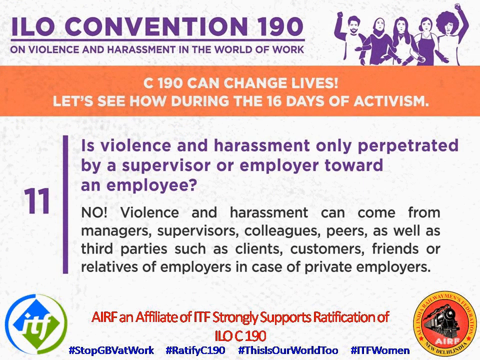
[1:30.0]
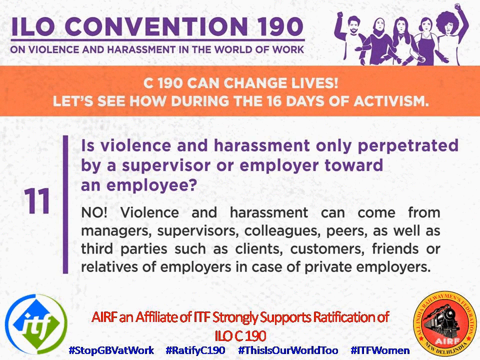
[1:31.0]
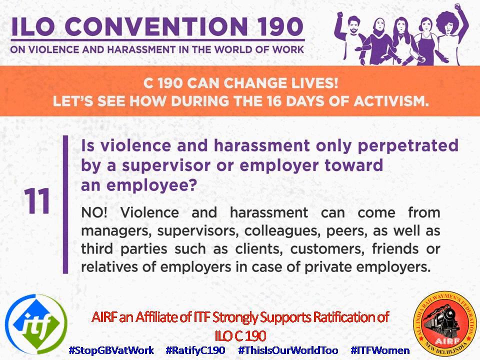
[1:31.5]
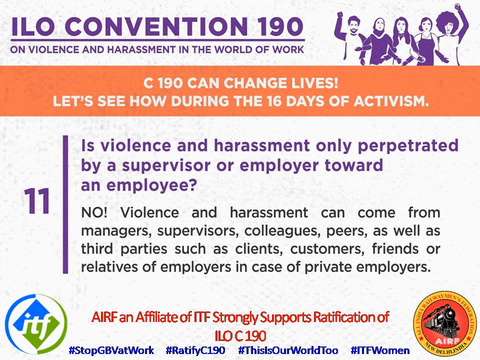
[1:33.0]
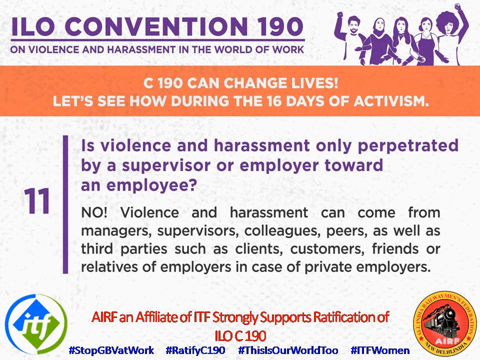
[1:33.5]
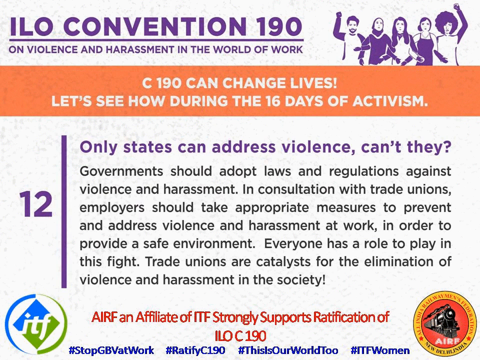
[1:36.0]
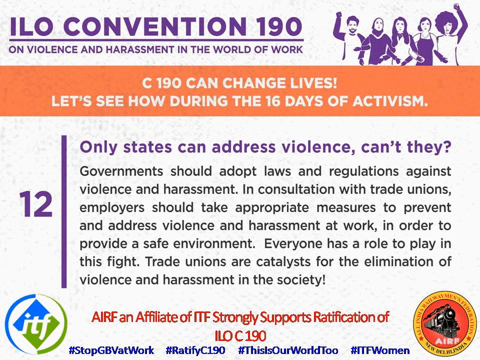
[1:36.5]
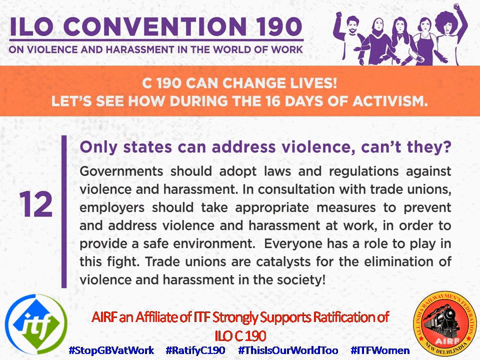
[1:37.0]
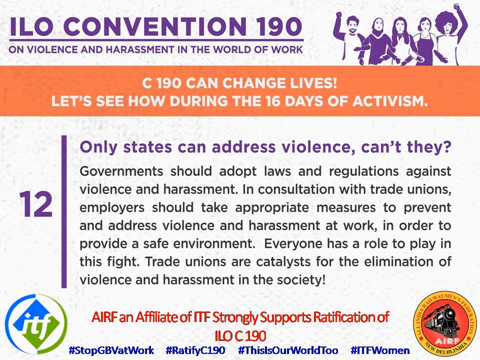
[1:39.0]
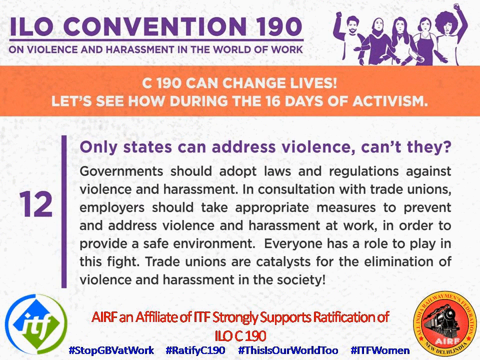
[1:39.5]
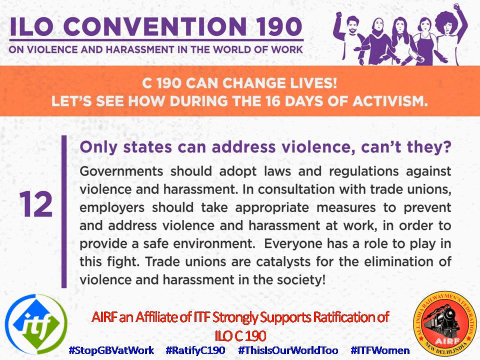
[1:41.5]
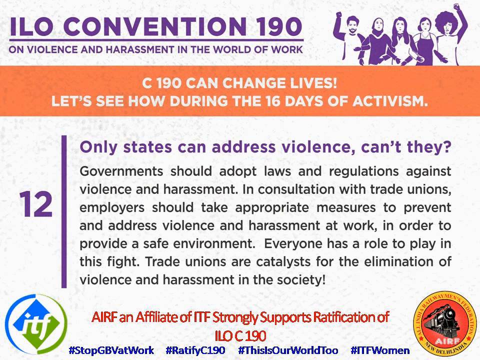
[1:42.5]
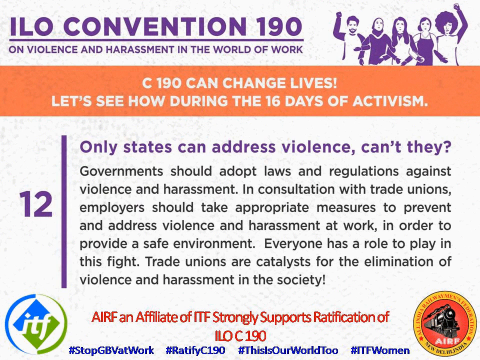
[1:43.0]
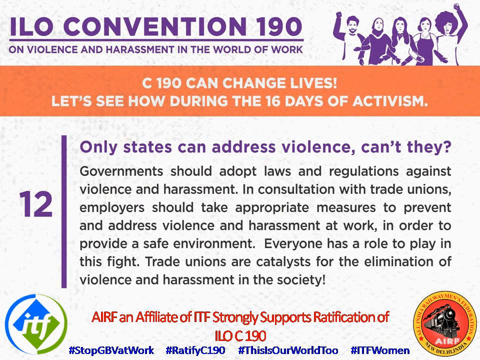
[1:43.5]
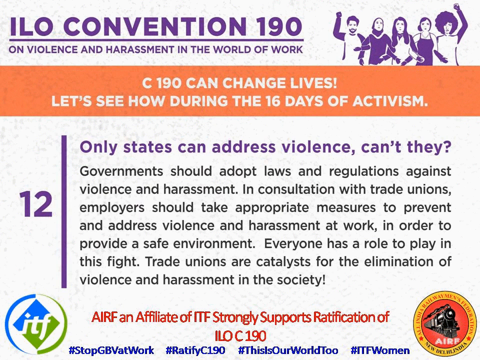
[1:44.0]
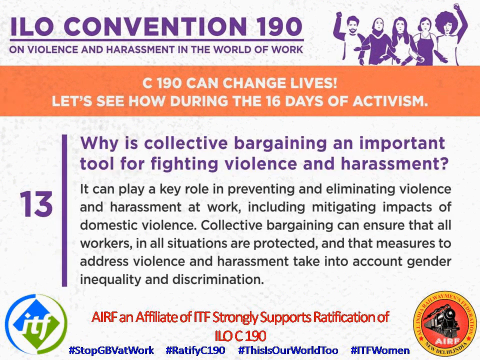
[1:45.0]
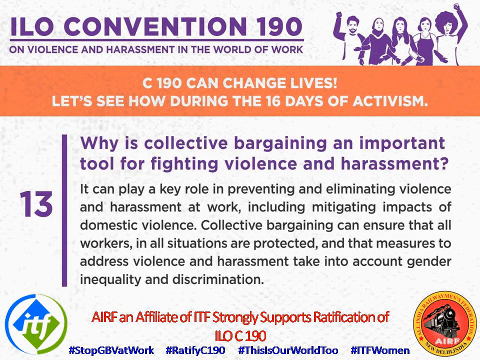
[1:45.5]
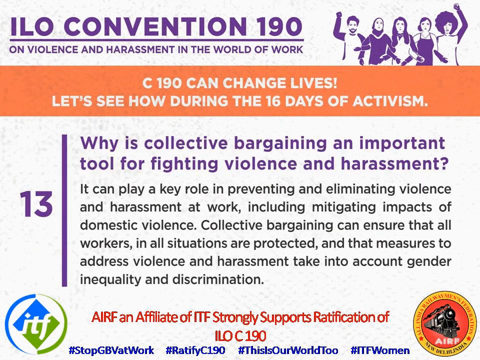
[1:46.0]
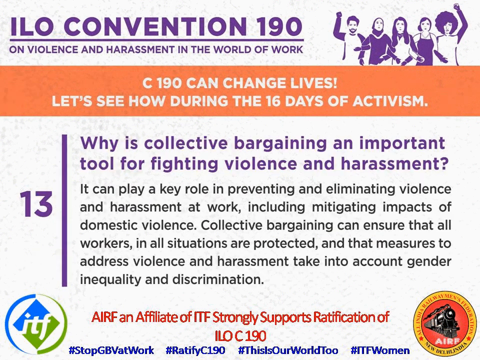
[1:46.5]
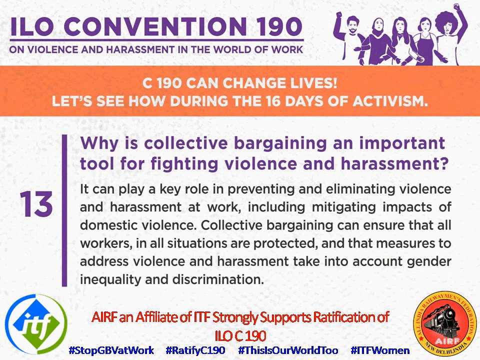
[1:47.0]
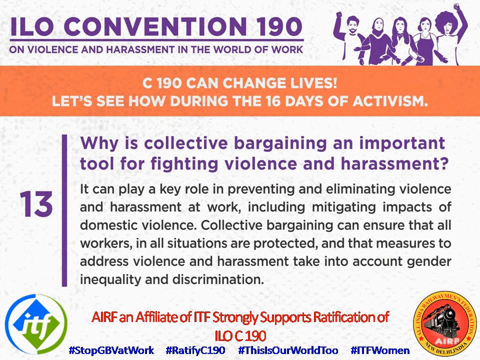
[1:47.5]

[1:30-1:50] Section 11 has a purple 11 on the left and purple text on the right: "Is violence and harassment only perpetrated by a supervisor or employer toward an employee?" Black text beneath states "No, violence and harassment can come from managers, supervisors, colleagues, peers, as well as third parties such as clients, customers, friends or relatives of employers in case of private employers." A small open white space follows, then red text: "AIRF, an affiliate of ITF, strongly supports ratification of ILOC 190." Section 12 has a purple 12 on the left, and at the top right purple text says "Only states can address violence, can't they?" Black text beneath states "Governments should adopt laws and regulations against violence and harassment. In consultation with trade unions, employers should take appropriate measures to prevent and address violence and harassment at work in order to provide a safe environment. Everyone has a role to play in this fight. Trade unions are catalysts for the elimination of violence and harassment in the society." A small open white space and the red AIRF text follow, and section 13 is beneath.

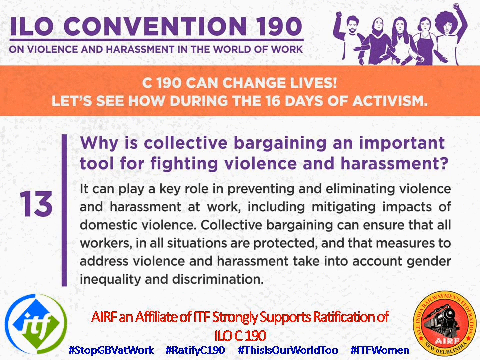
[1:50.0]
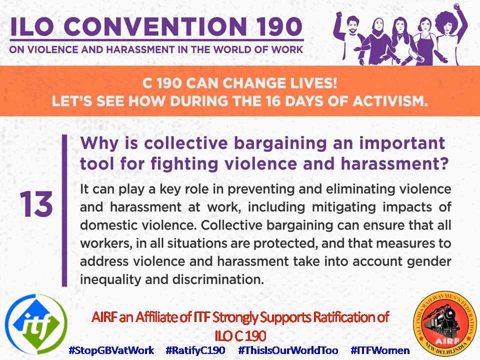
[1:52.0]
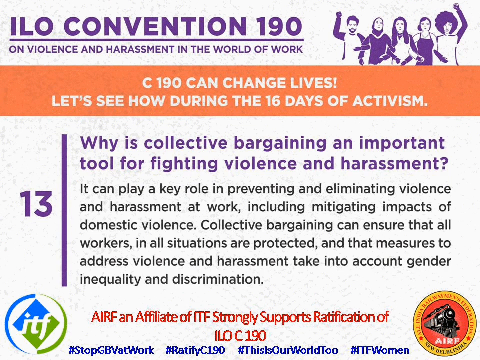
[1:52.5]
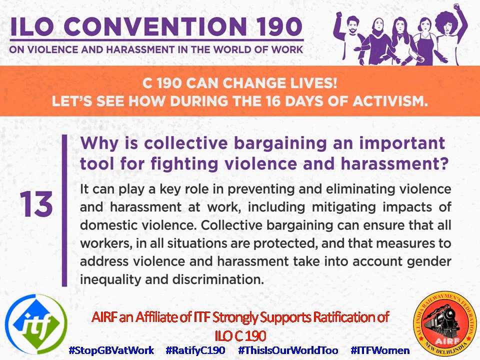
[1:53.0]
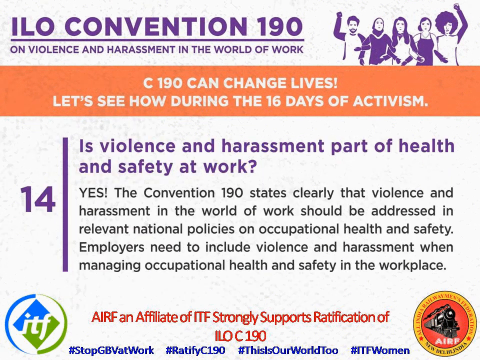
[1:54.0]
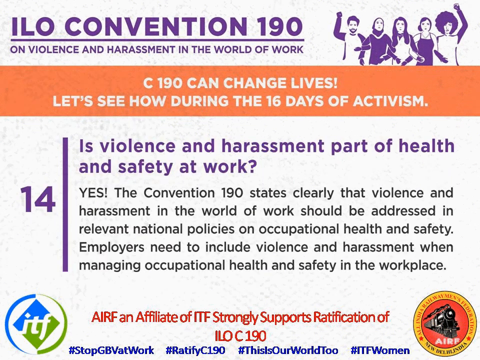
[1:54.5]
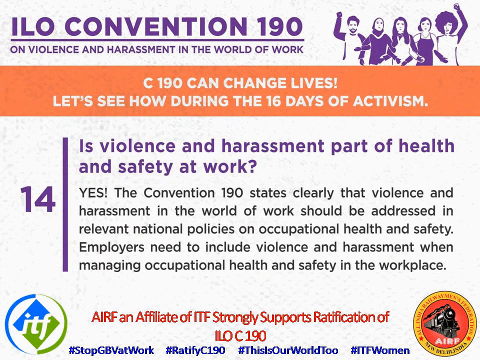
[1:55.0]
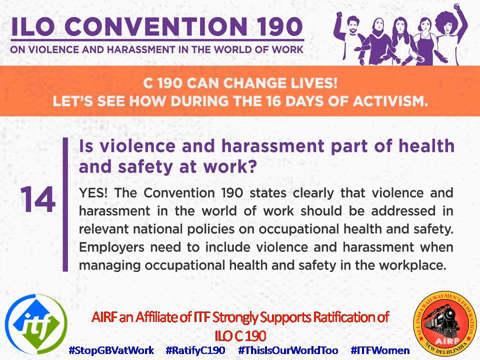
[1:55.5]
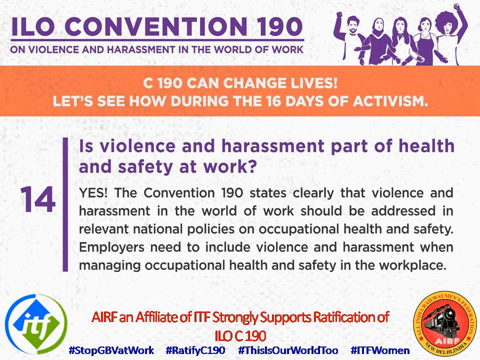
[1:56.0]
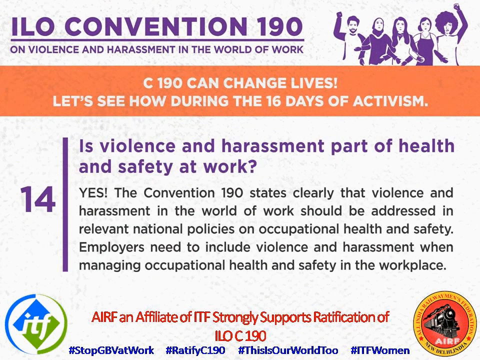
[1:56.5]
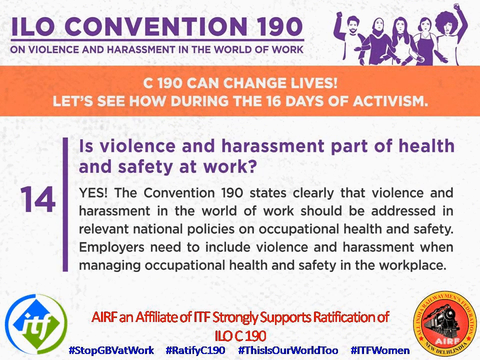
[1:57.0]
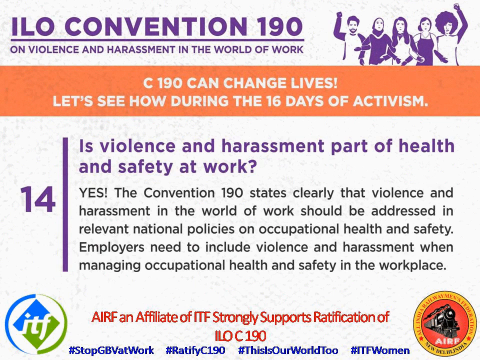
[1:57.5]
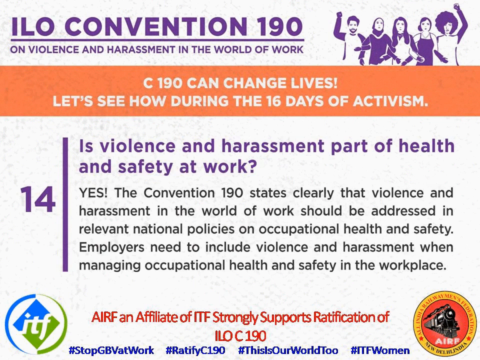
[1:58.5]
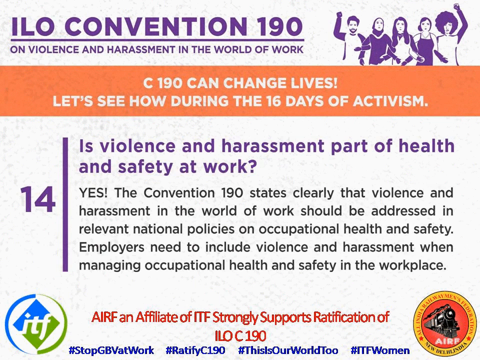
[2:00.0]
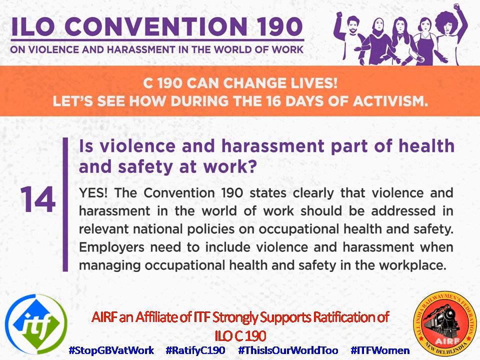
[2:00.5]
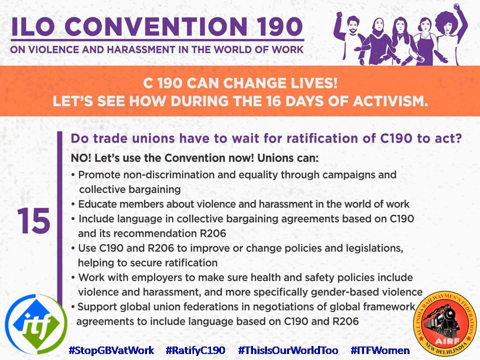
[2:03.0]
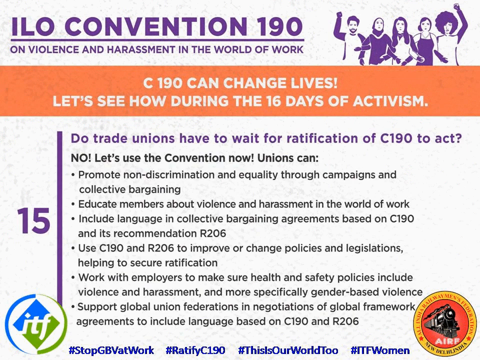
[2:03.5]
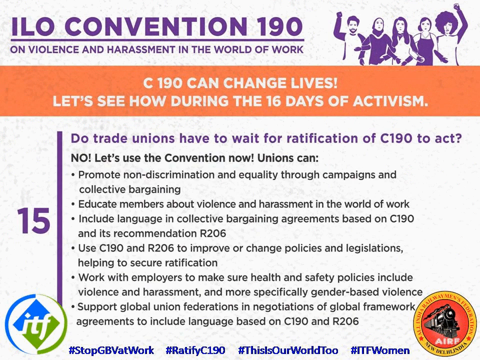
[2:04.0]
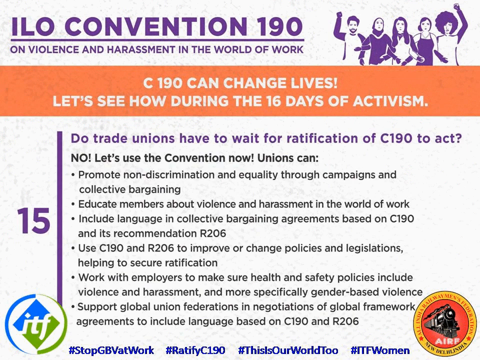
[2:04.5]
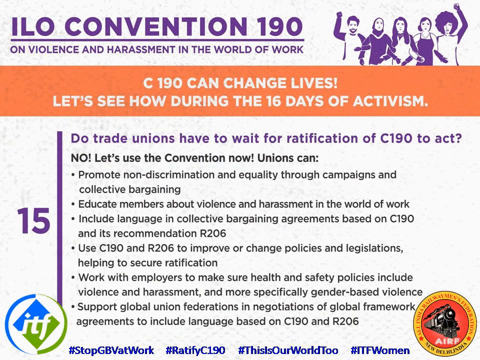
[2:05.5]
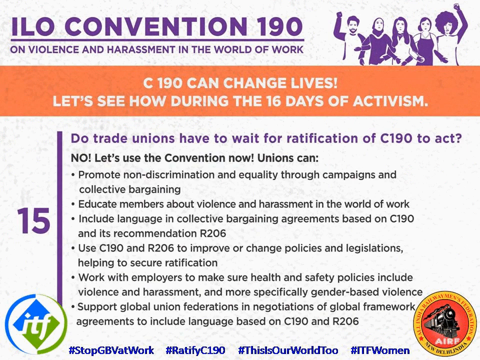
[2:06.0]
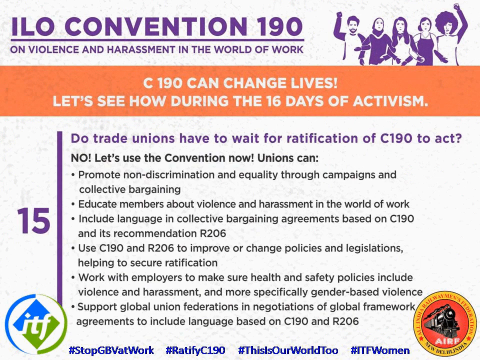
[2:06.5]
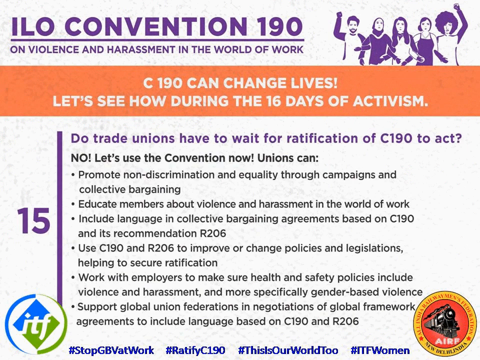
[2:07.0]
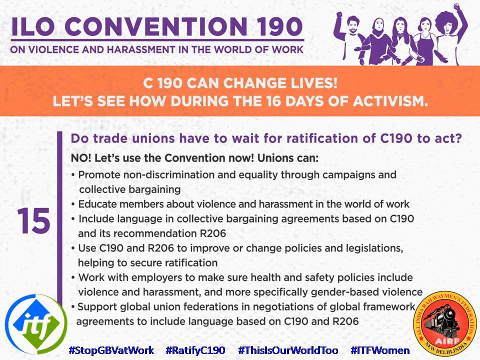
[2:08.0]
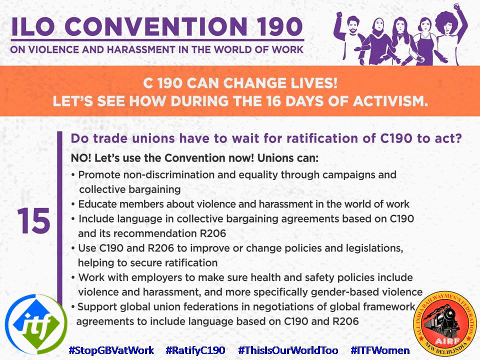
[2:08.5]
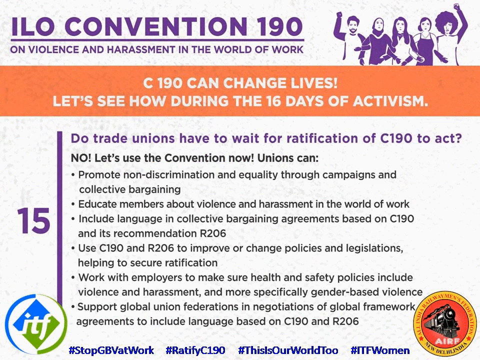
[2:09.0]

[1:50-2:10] Section 13 has a purple 13 on the left and purple text on the right: "Why is collective bargaining an important tool for fighting violence and harassment?" Black text beneath says "It can play a role in preventing and eliminating violence and harassment at work, including mitigating impacts of domestic violence. Collective bargaining can ensure that all workers in all situations are protected and that measures to address violence and harassment take into account gender inequality and discrimination." A small open white space follows, then red text: "AIRF and affiliate of ITF strongly supports ratification of ILO C-190." Section 14 has a purple number 14 on the left side, and at the top right purple lettering says "Is violence and harassment part of health and safety at work?" Black text beneath says "Yes, the convention 190 states clearly that violence and harassment in the world of work should be addressed in relevant national policies on occupational health and safety. Employers need to include violence and harassment when managing occupational health and safety in the workplace." A small open white space and the red AIRF text follow.